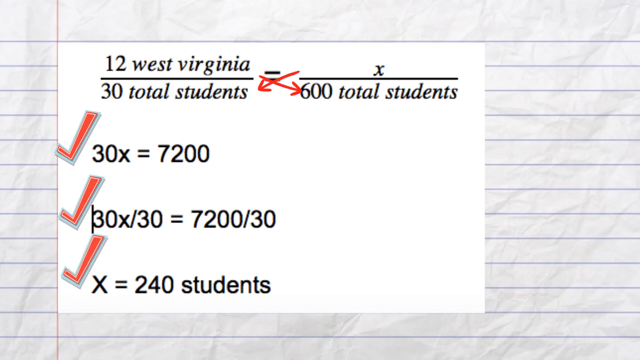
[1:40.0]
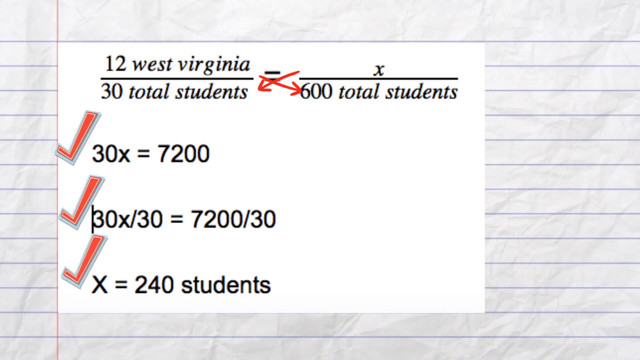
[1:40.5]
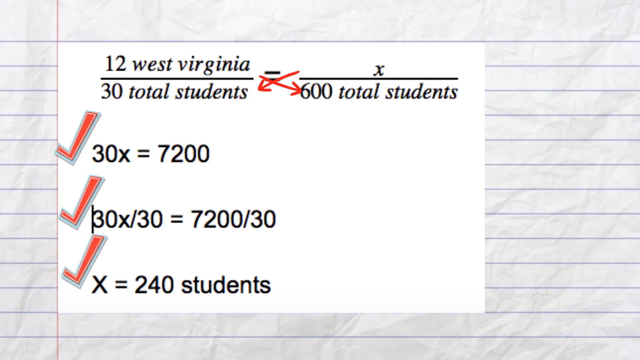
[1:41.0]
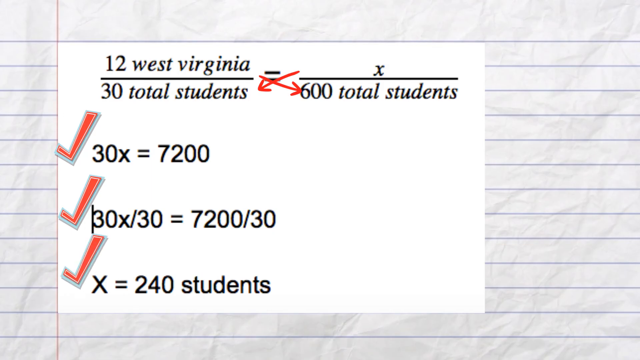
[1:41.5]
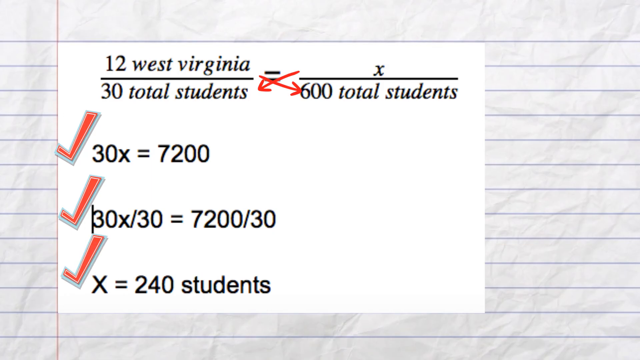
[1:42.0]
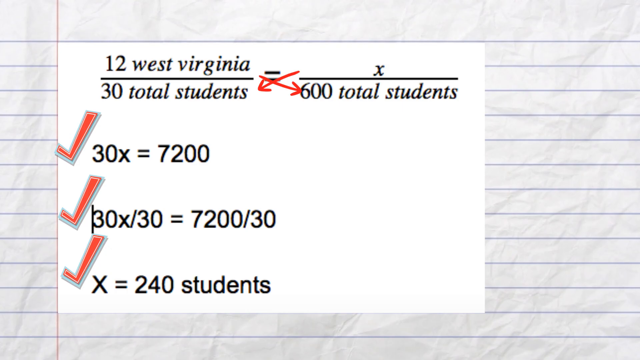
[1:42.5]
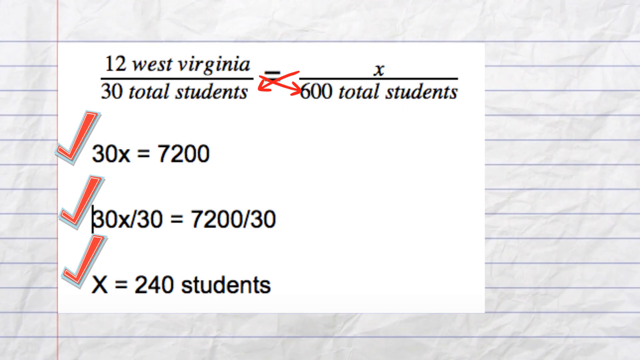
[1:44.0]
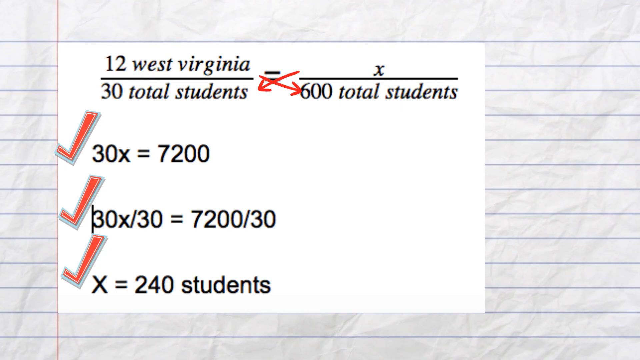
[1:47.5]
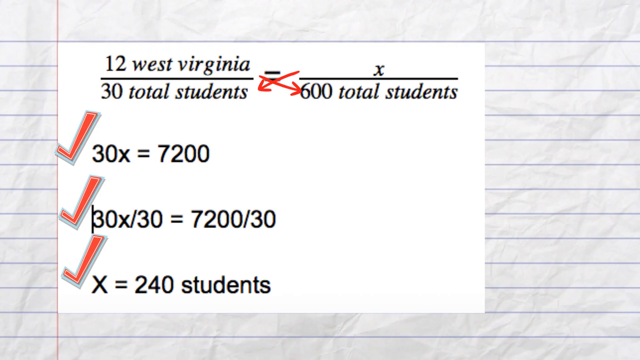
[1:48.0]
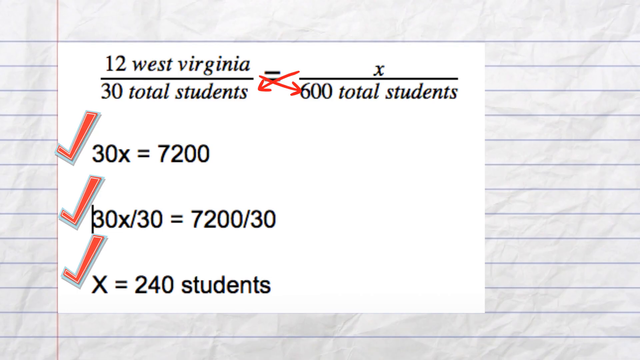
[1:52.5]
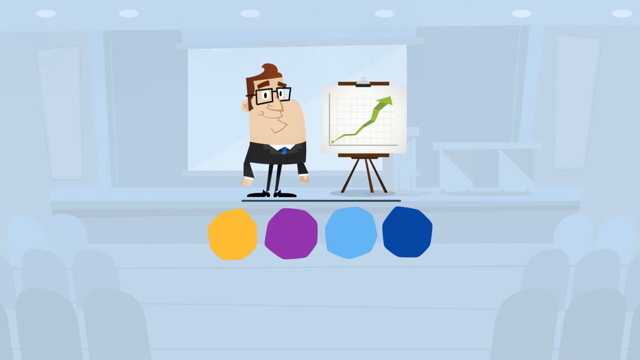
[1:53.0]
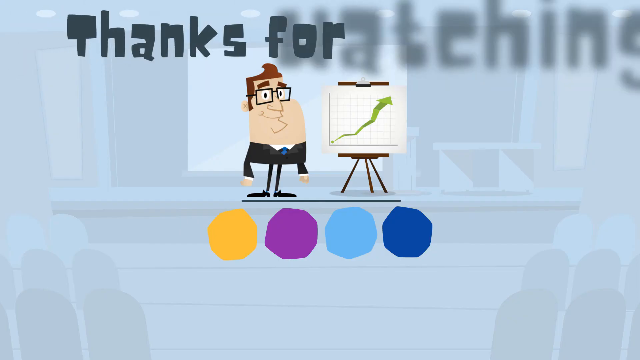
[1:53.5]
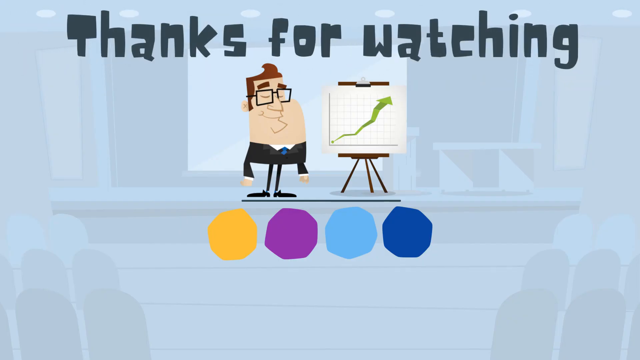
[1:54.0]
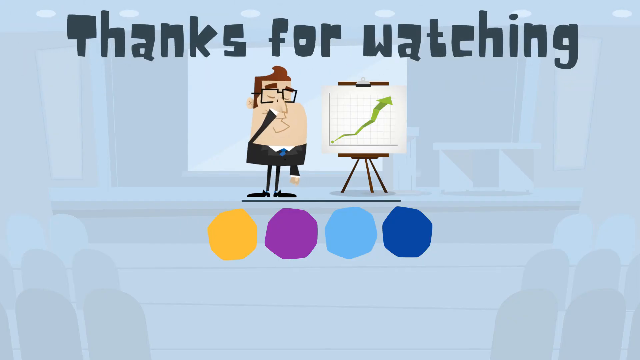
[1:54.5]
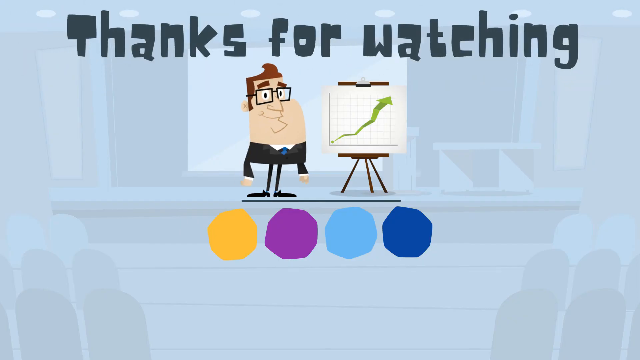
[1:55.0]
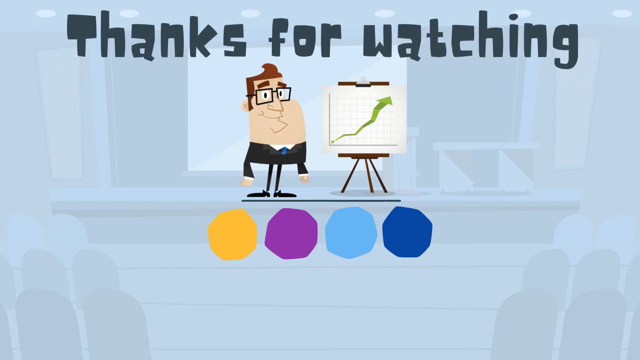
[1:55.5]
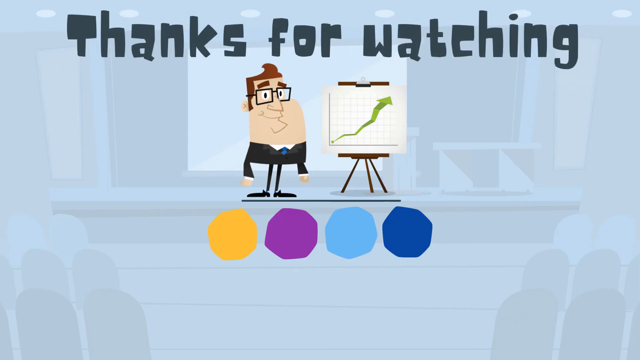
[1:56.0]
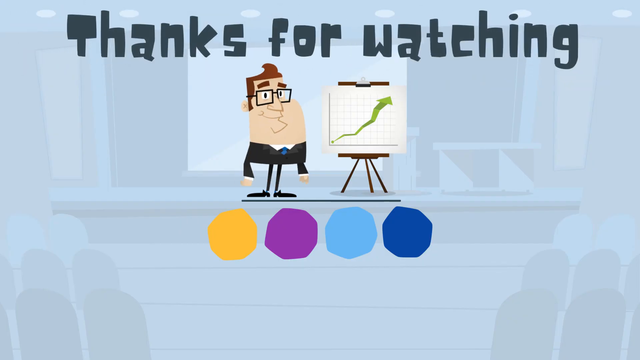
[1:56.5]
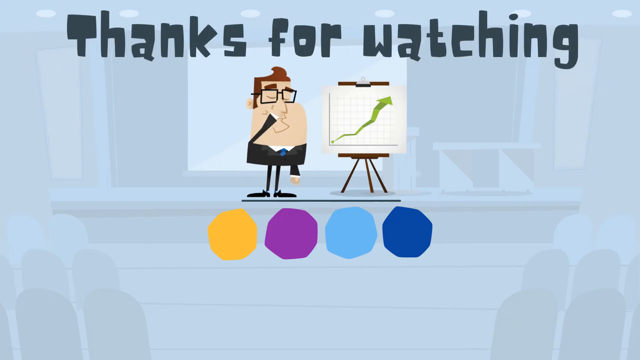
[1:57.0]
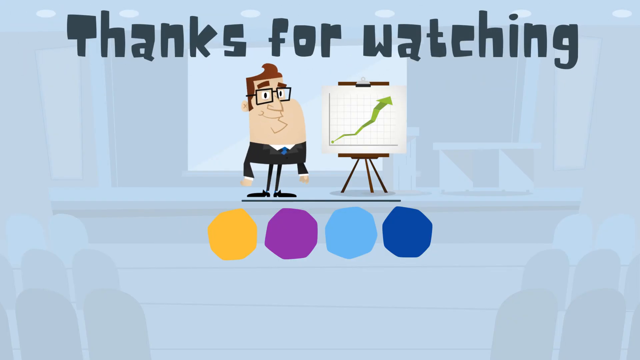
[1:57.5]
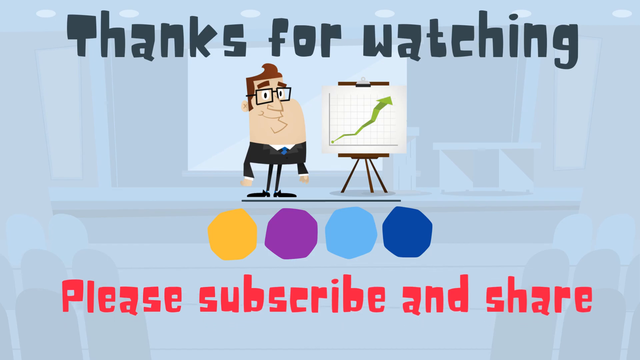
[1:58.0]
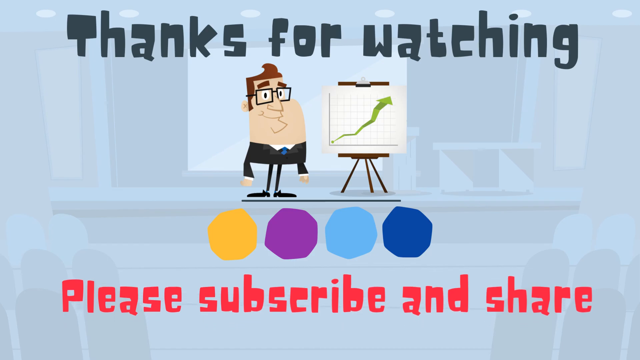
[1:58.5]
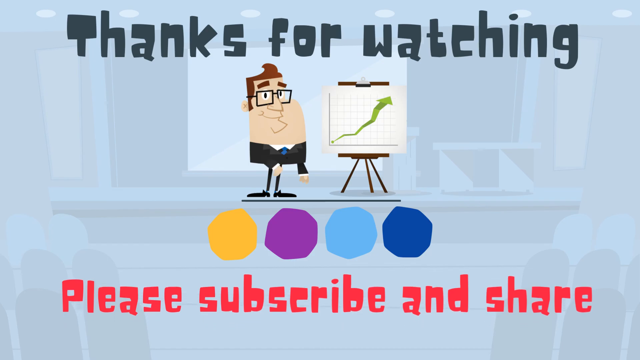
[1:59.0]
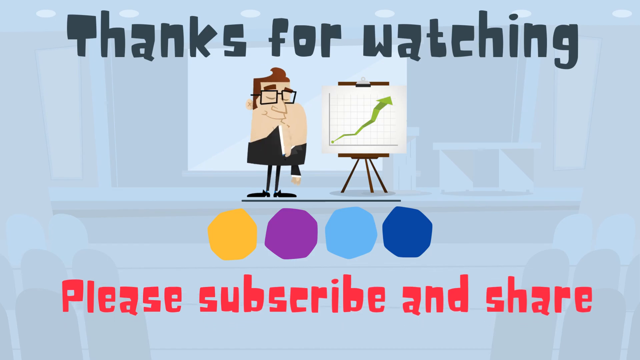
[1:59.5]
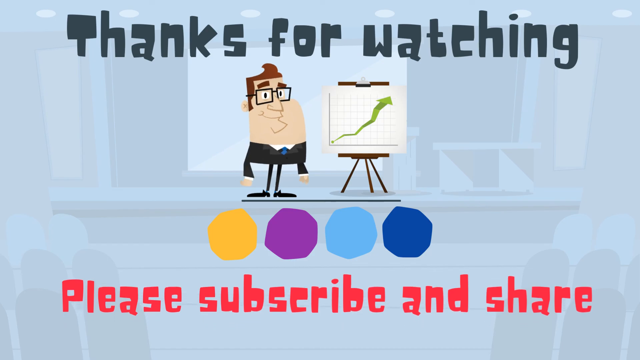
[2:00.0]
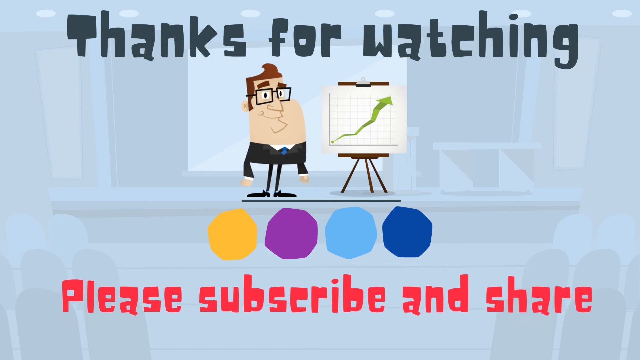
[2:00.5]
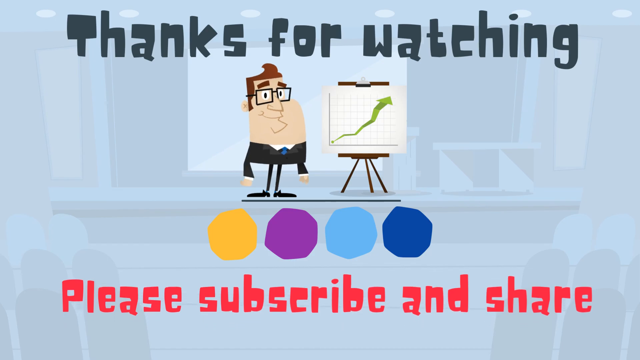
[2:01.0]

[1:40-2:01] The final line, x = 240 students, is check-marked. A flat, cartoon, retro-style graphic then cuts in, and the letters "Thanks for watching" shoot out toward the screen and into focus. Right below the text, a cartoon man with black wire-rim glasses stands at a chart on an easel showing a graph with a green line going up. Colored octagons, apparently yellow, purple, light blue and navy blue, appear. All of this is set in a dim classroom background that is kind of semi-transparent against a light blue-grayish background. The cartoon character is a white man with brown hair in a black suit, with cartoonishly thin legs. He touches his nose, pushing up his glasses multiple times while blinking. Red text moves up from the bottom of the frame reading "please subscribe and share."